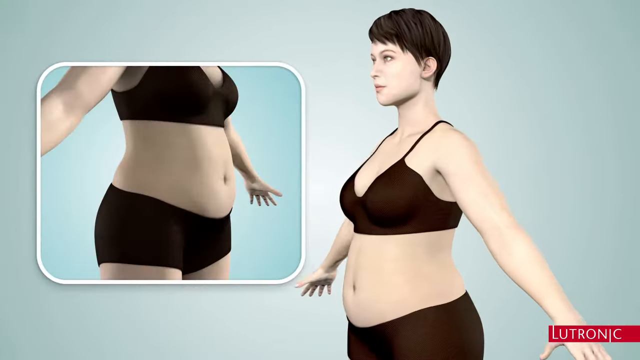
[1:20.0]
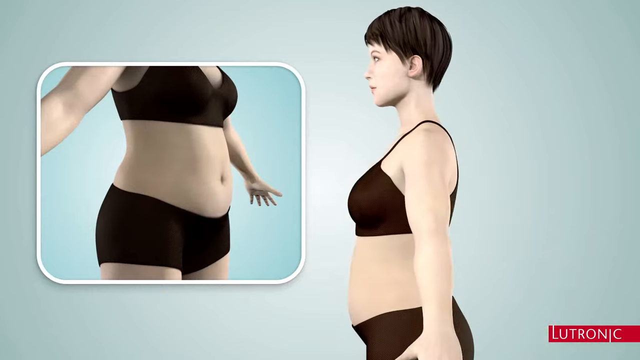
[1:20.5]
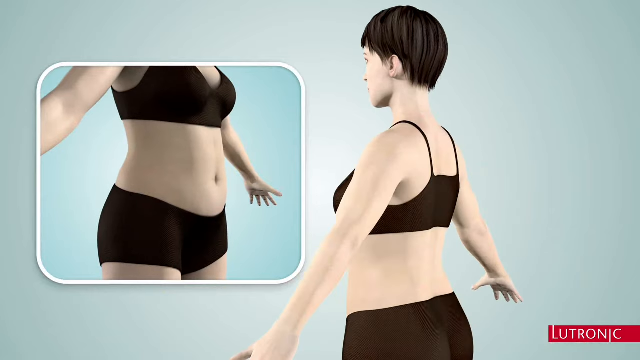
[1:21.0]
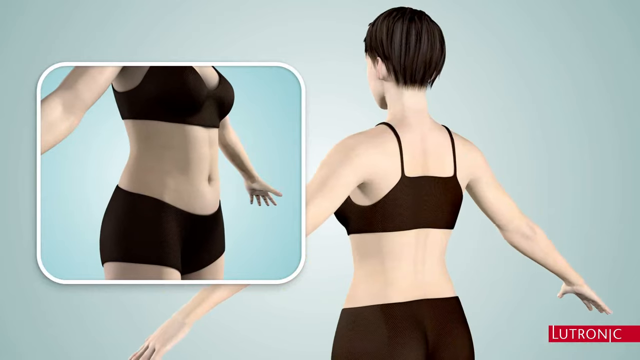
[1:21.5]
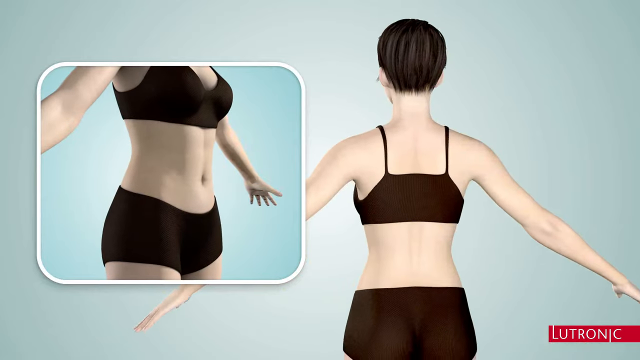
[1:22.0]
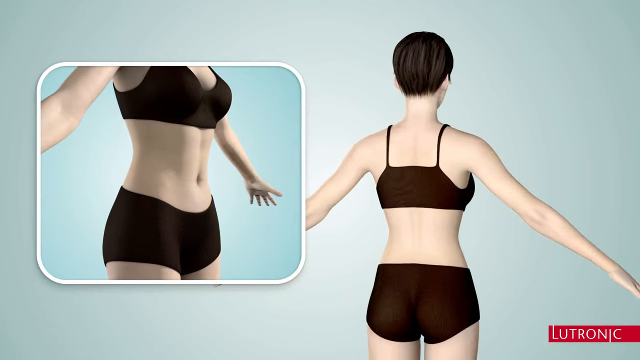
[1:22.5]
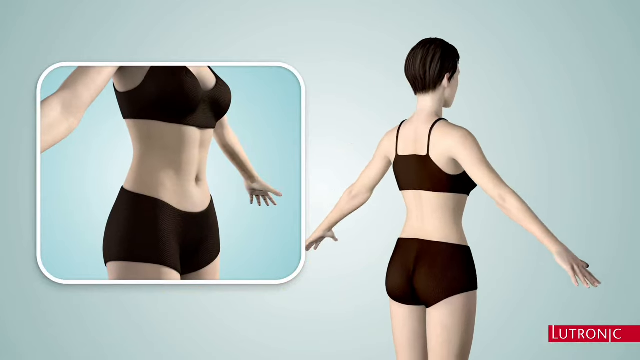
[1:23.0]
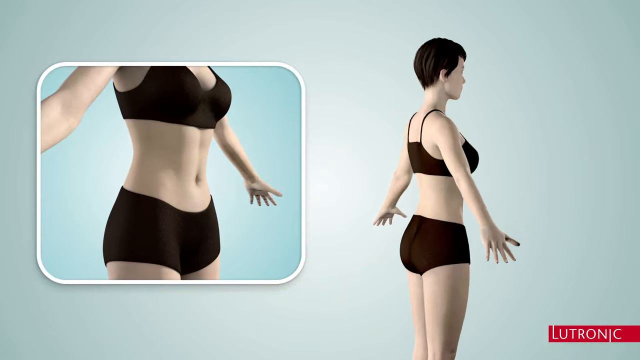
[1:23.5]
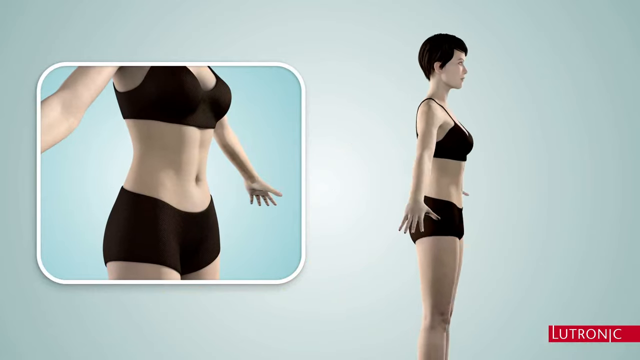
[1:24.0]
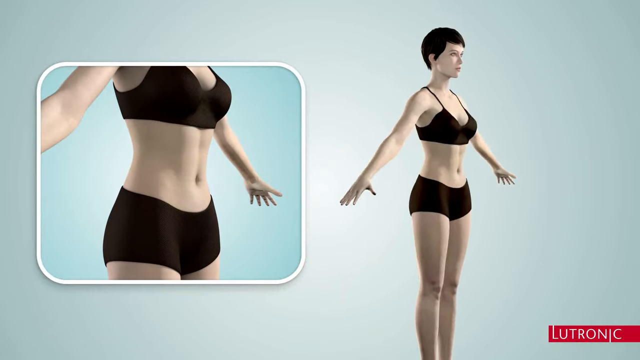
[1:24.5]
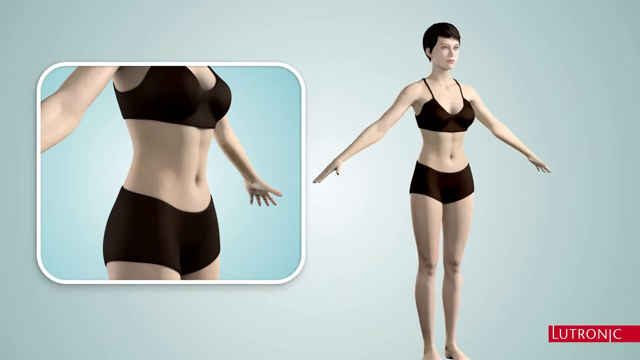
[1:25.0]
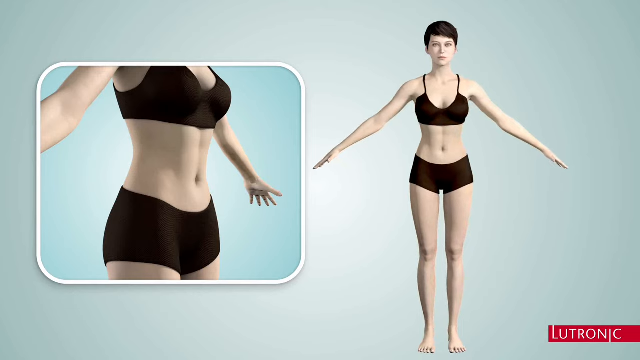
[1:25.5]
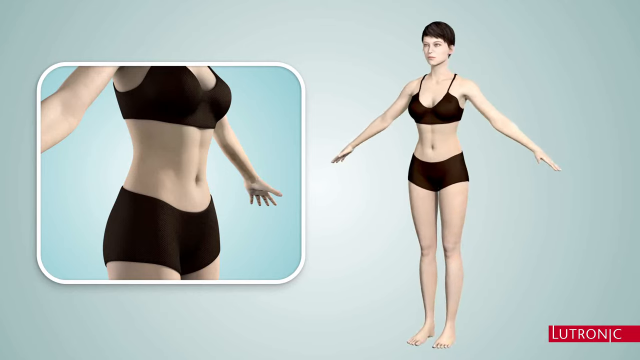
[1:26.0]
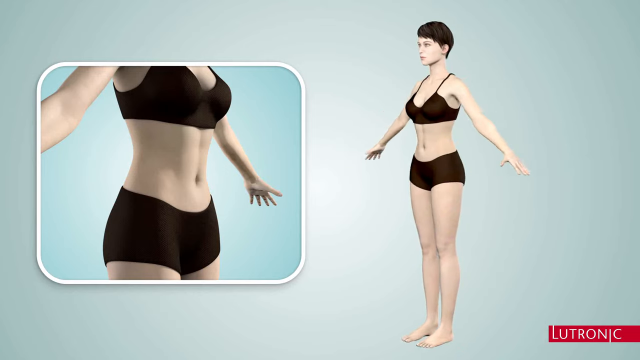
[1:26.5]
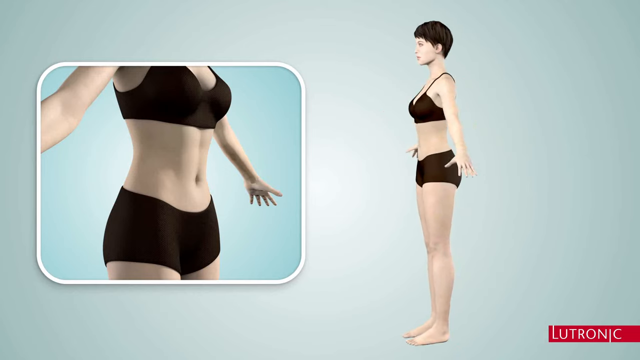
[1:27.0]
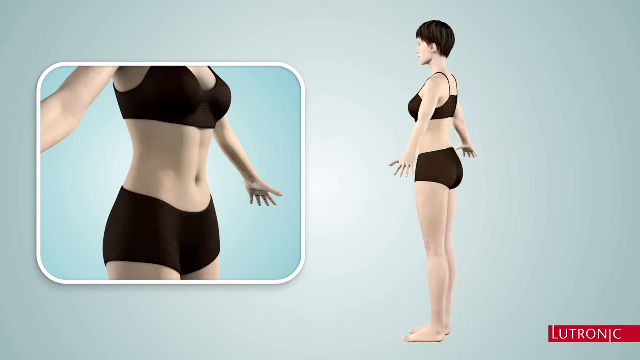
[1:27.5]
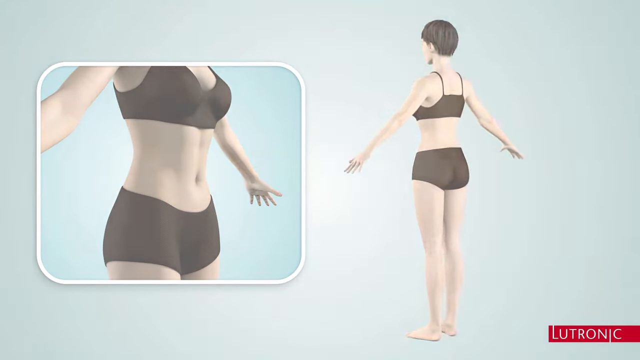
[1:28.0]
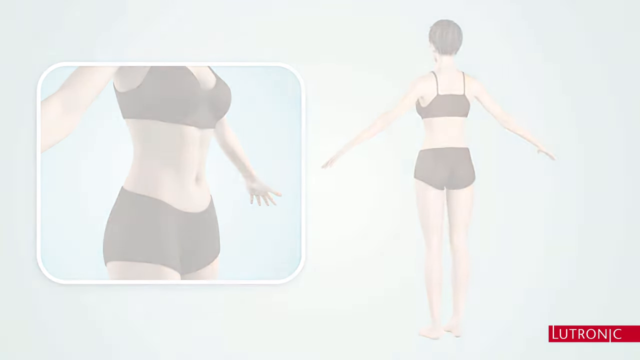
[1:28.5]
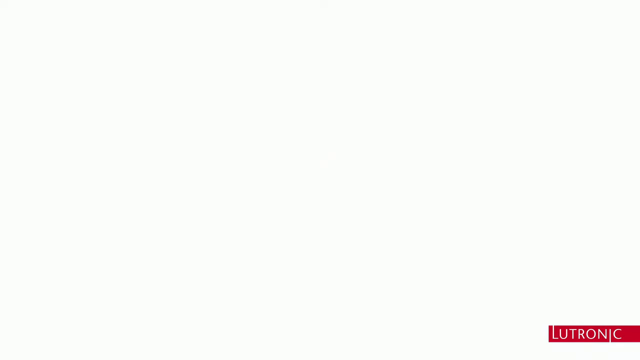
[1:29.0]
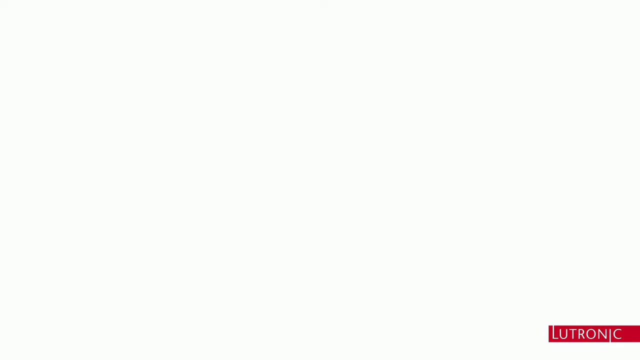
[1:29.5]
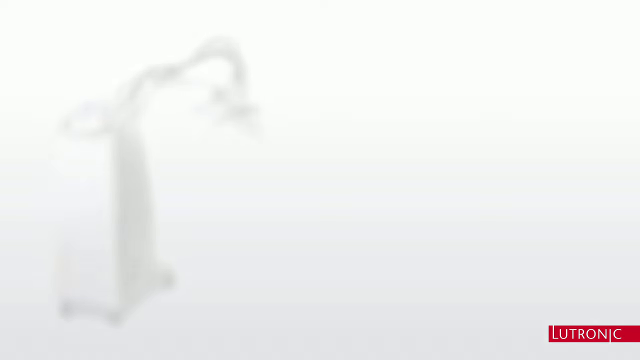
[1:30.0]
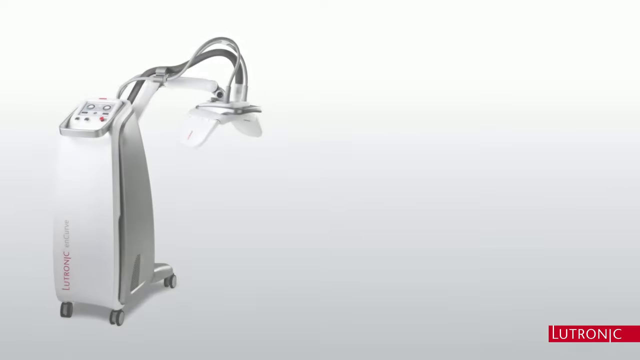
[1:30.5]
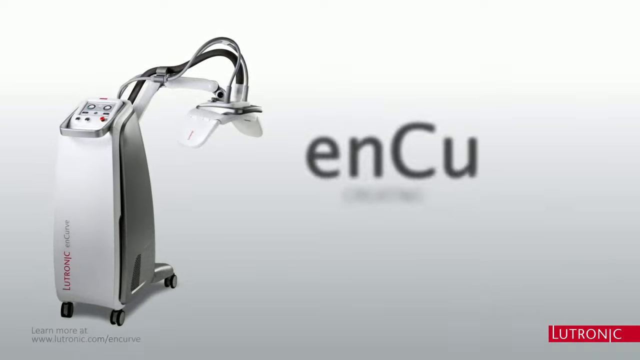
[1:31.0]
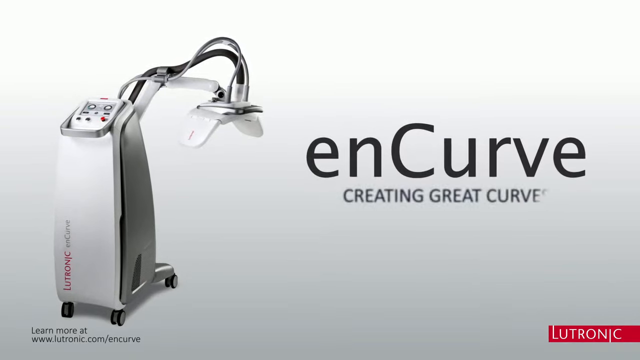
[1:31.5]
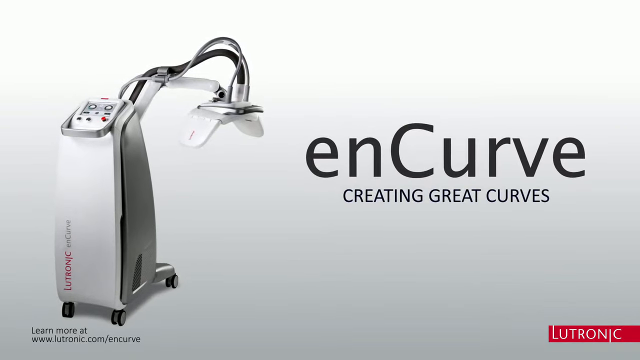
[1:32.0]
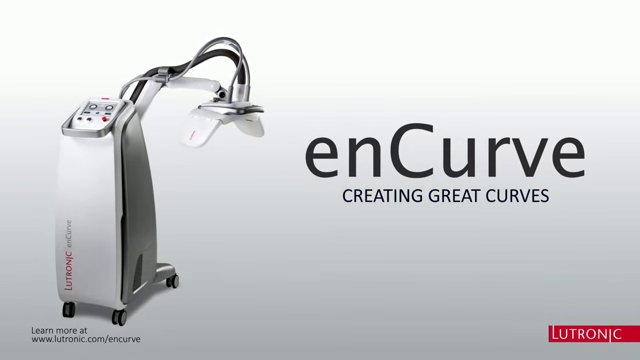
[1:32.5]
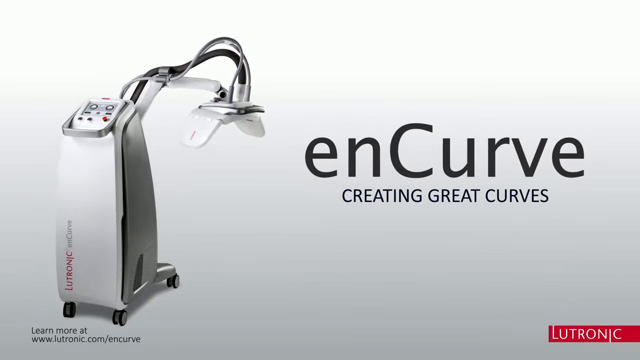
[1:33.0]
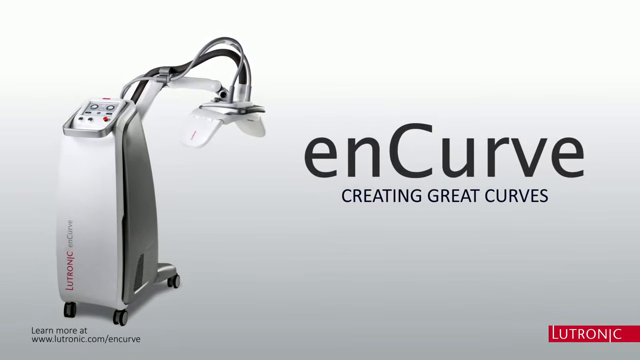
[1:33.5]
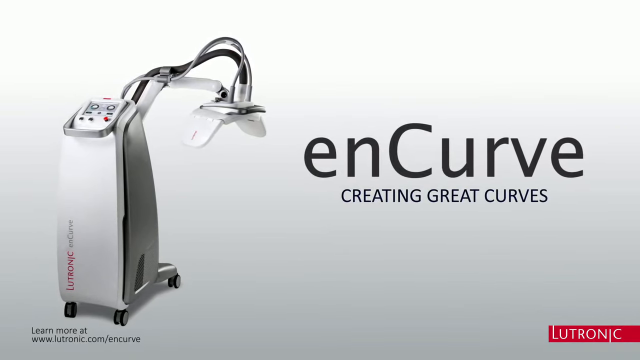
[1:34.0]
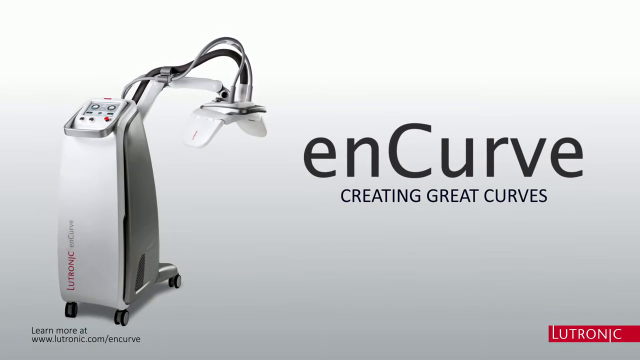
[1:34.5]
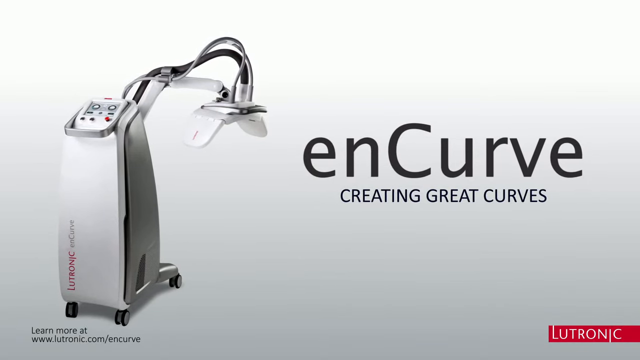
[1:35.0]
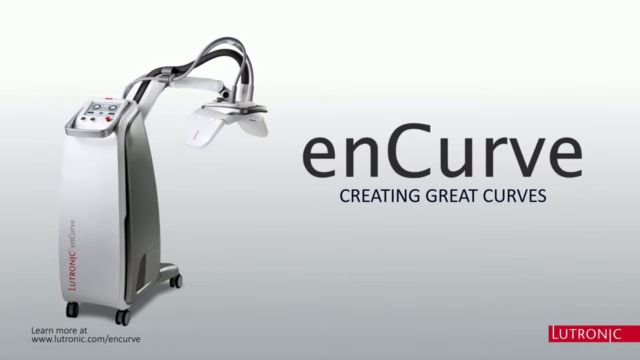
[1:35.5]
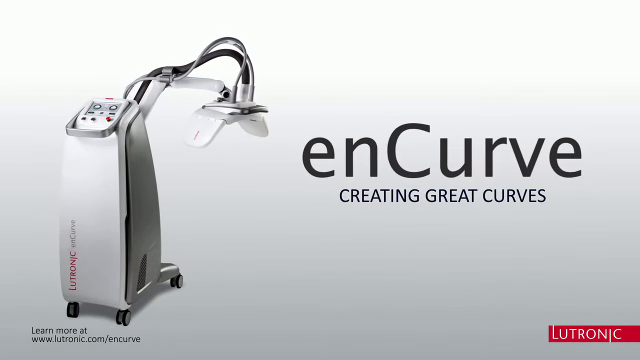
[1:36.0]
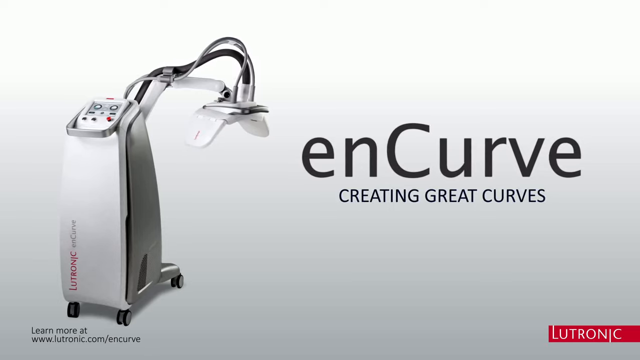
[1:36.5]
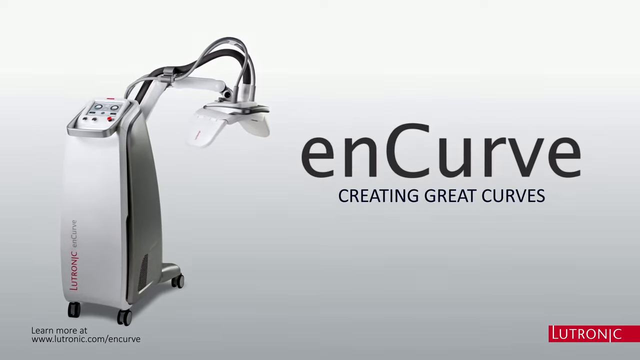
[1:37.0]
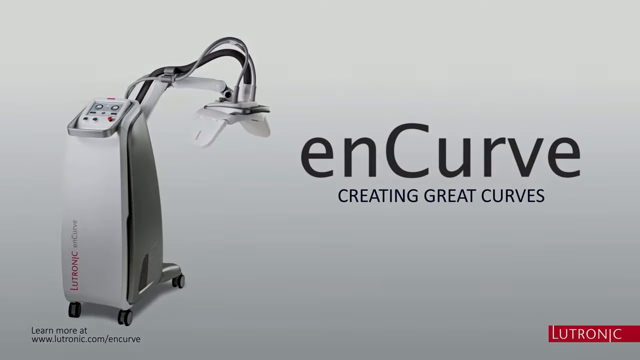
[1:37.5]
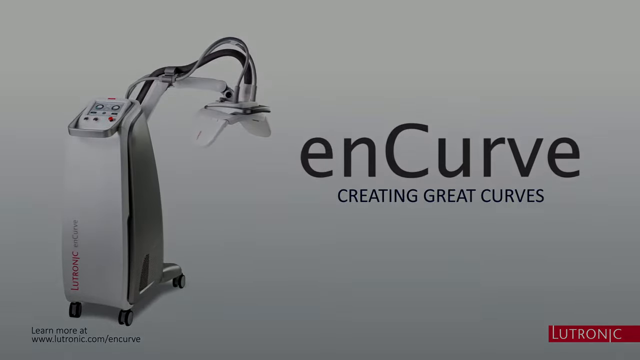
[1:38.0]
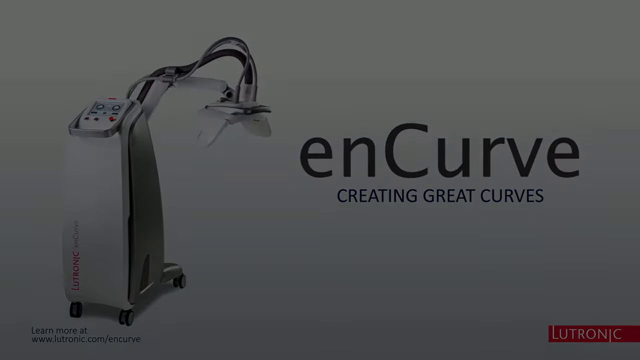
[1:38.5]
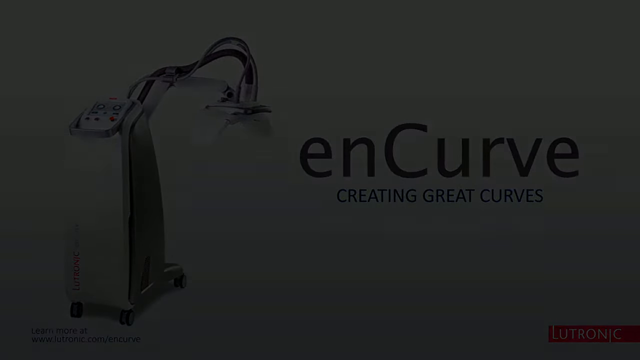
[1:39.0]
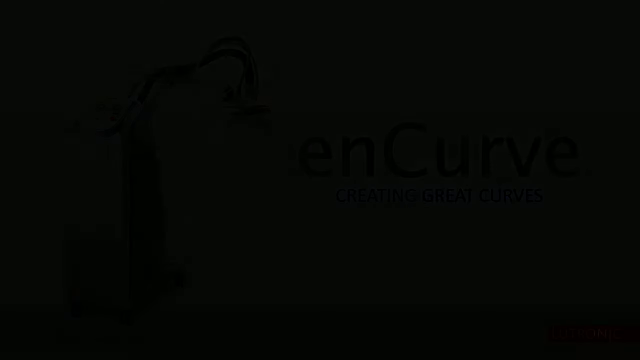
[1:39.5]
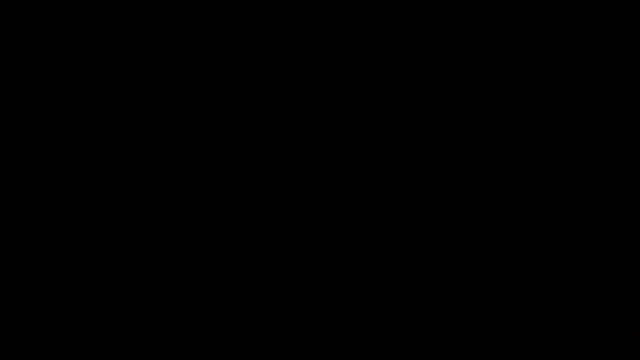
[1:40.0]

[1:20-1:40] A slide shows the model of a woman in underwear who turns around, with her body areas shown. There is a focus on the adipose tissue, then the focus moves in to the cellular level, showing fat cells heating up, apoptosis happening, and the cells exploding and being killed, with macrophages absorbing them. The skin is shown covering the sub-Q fat.